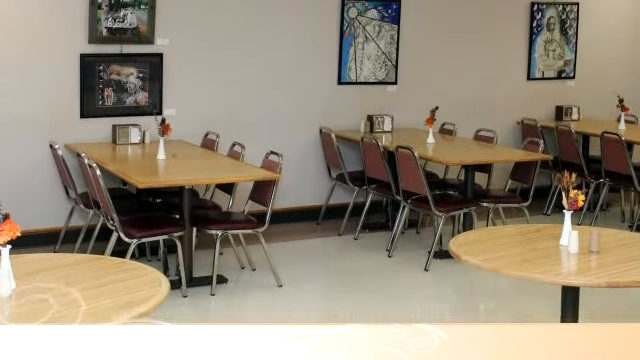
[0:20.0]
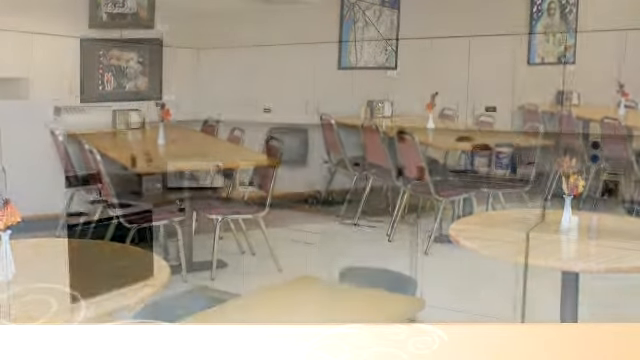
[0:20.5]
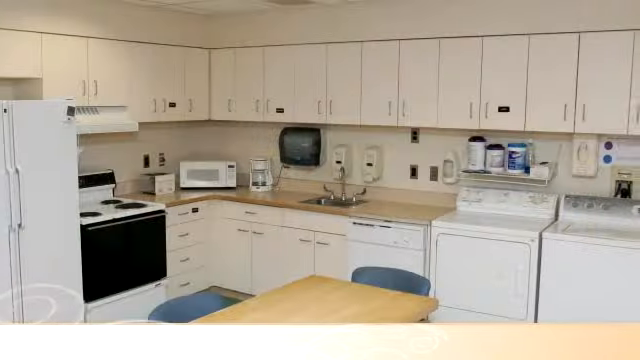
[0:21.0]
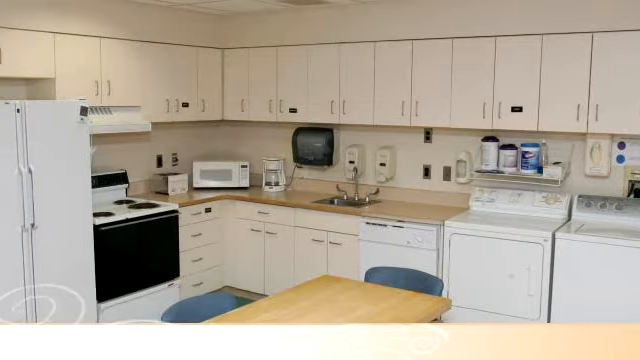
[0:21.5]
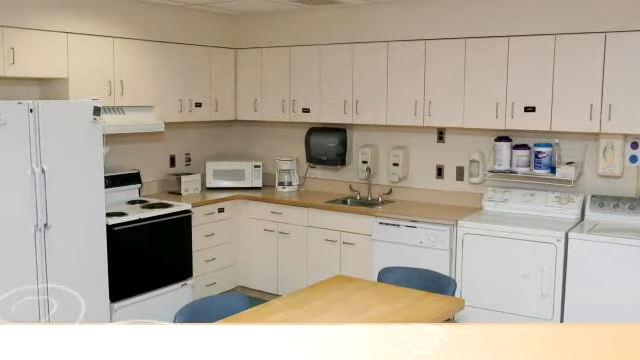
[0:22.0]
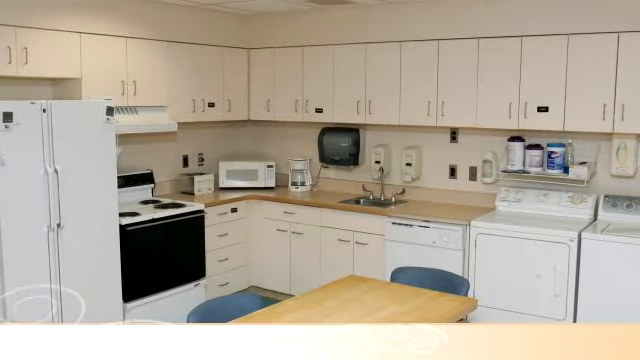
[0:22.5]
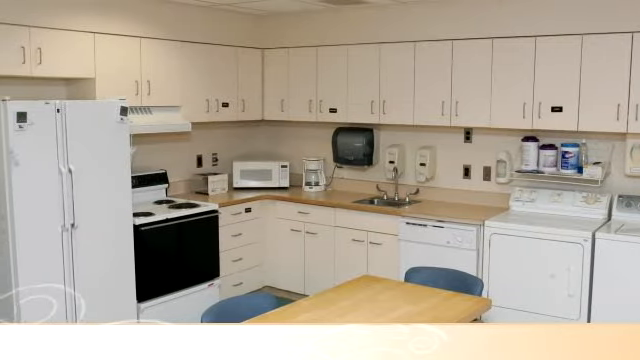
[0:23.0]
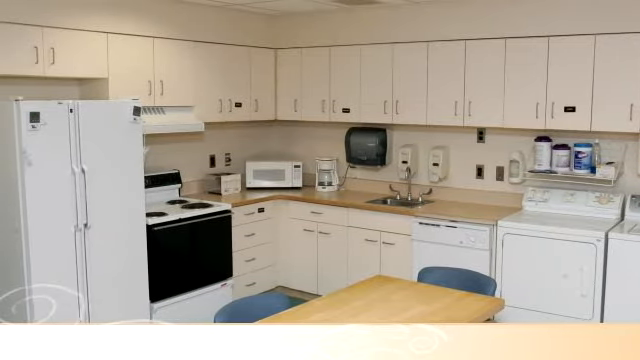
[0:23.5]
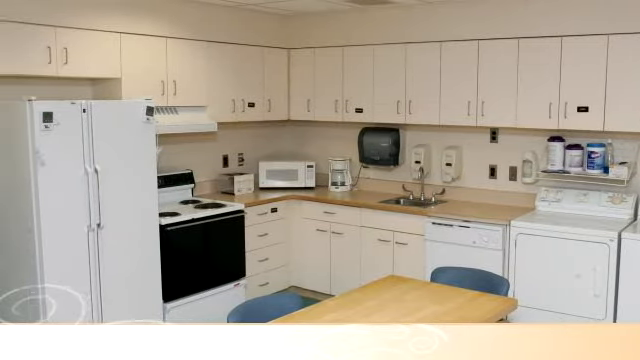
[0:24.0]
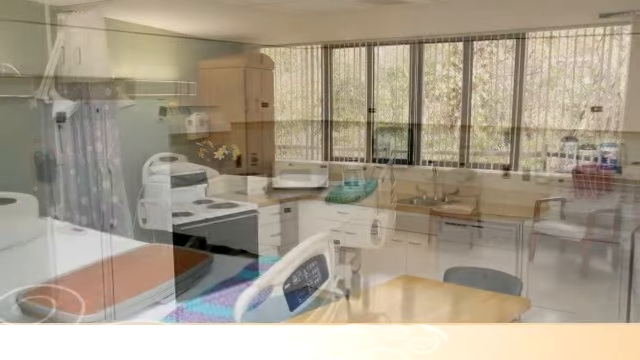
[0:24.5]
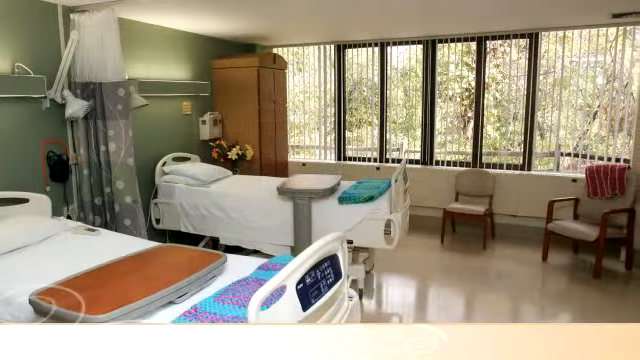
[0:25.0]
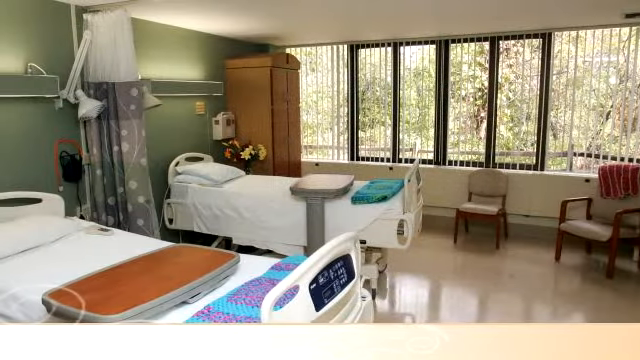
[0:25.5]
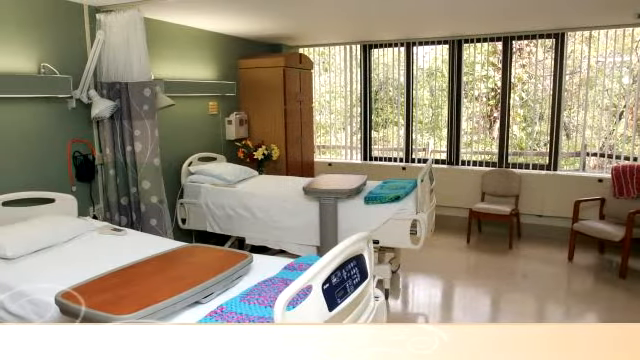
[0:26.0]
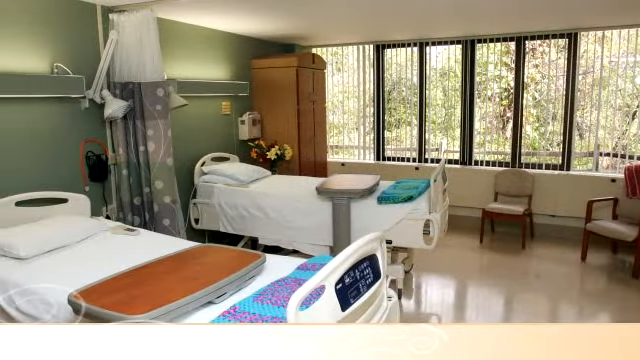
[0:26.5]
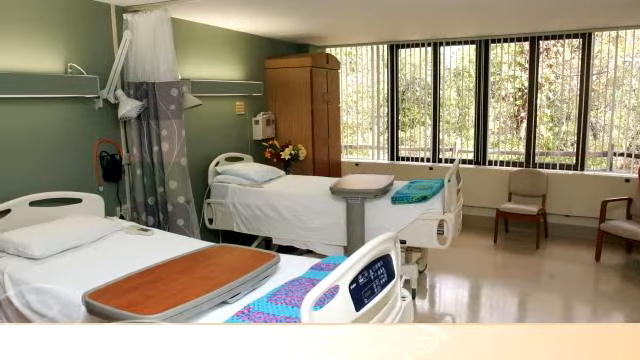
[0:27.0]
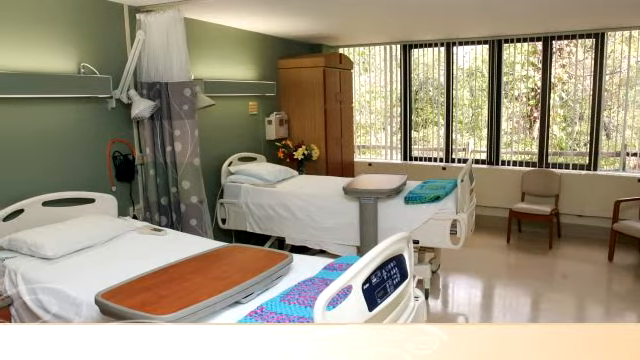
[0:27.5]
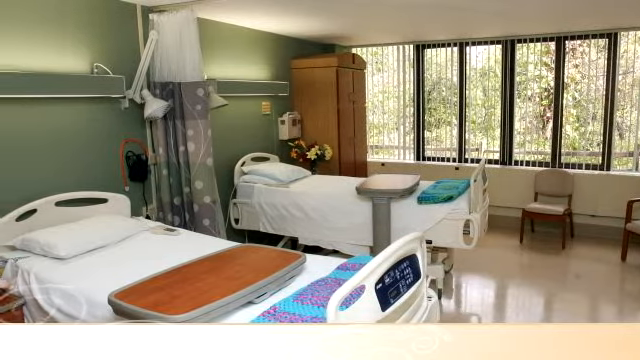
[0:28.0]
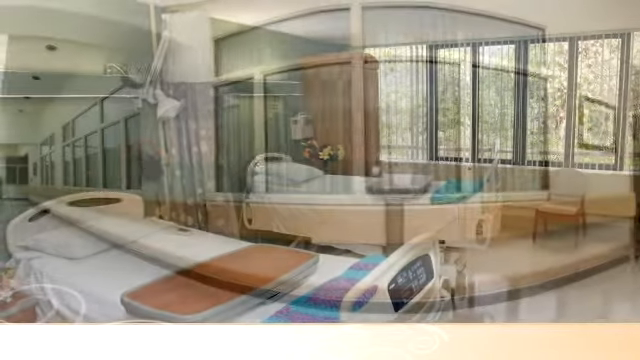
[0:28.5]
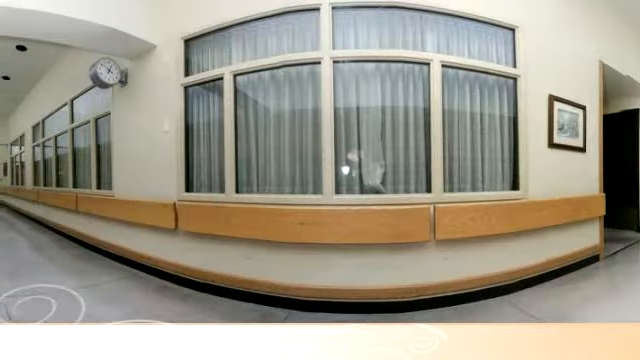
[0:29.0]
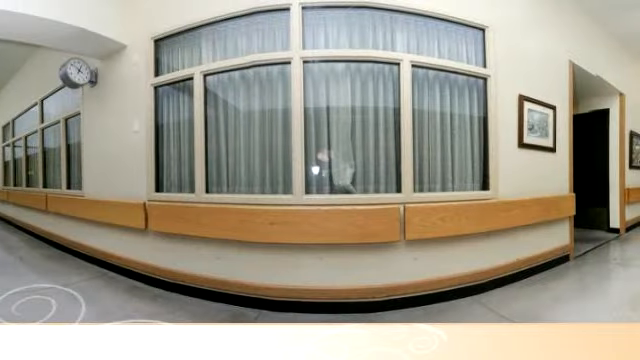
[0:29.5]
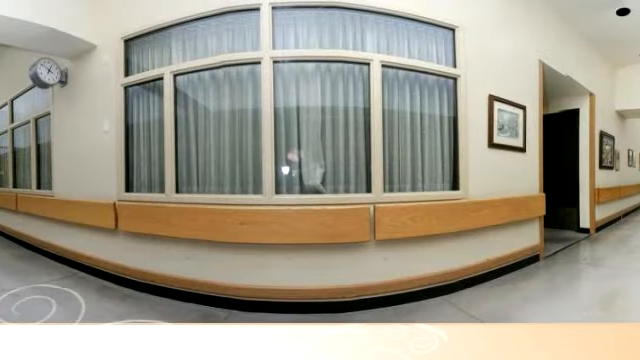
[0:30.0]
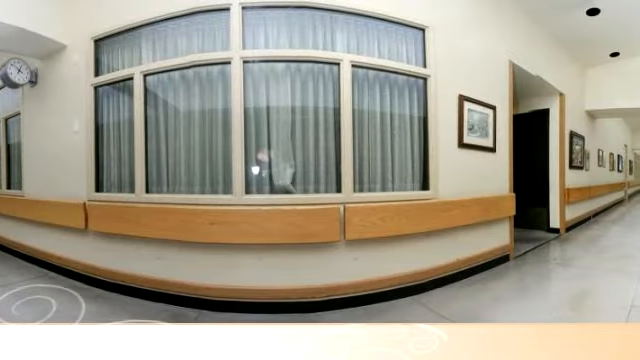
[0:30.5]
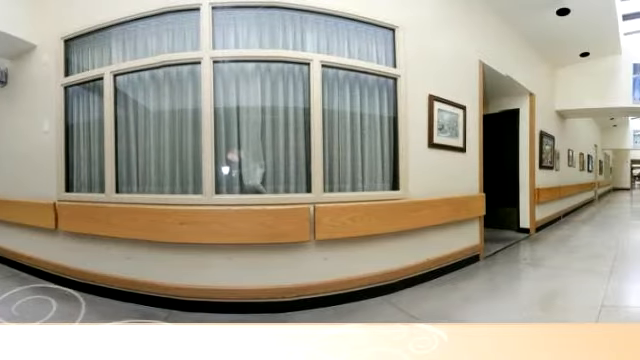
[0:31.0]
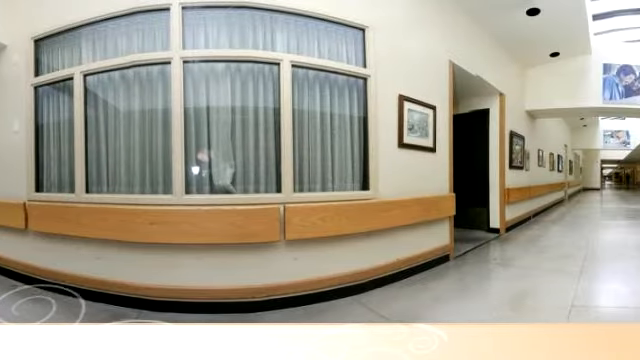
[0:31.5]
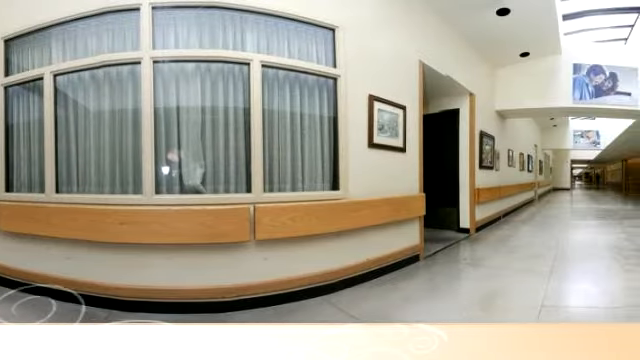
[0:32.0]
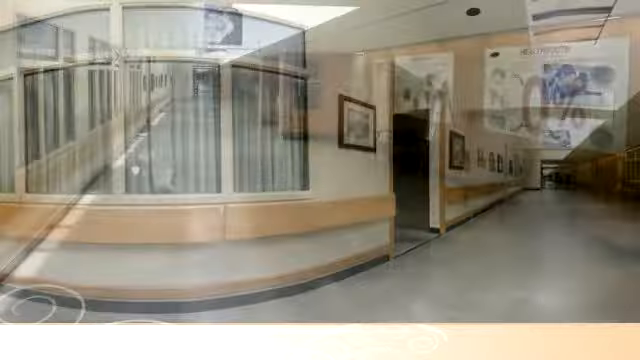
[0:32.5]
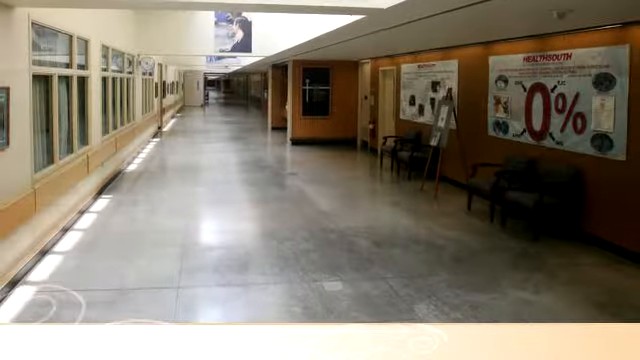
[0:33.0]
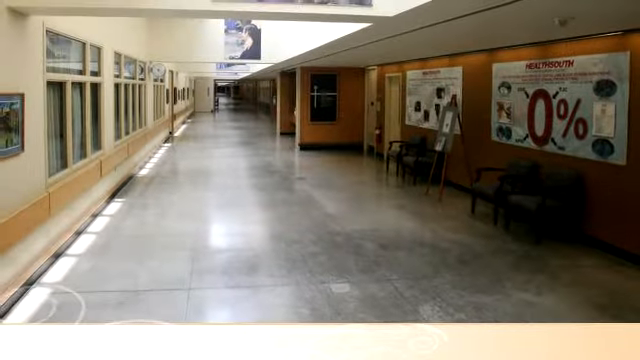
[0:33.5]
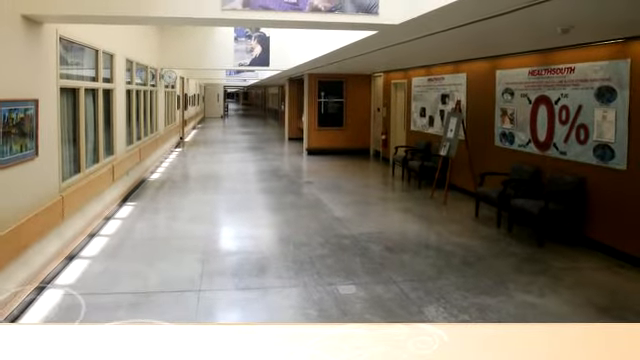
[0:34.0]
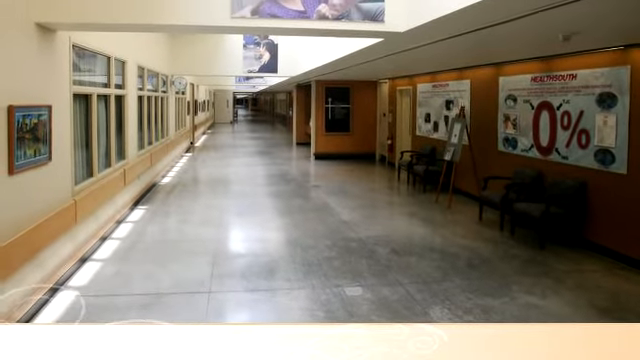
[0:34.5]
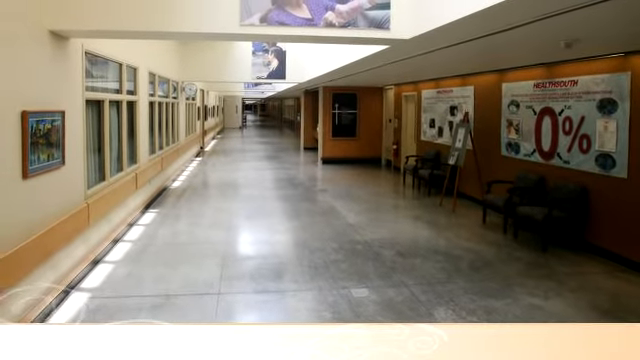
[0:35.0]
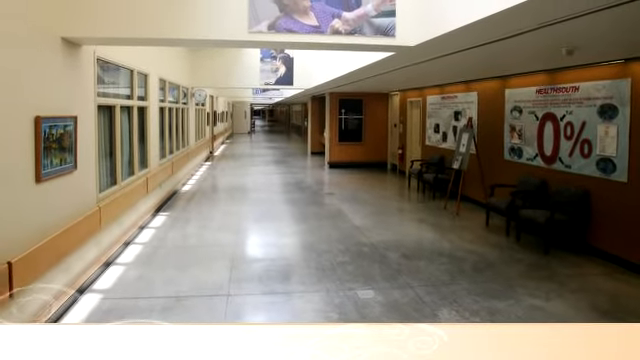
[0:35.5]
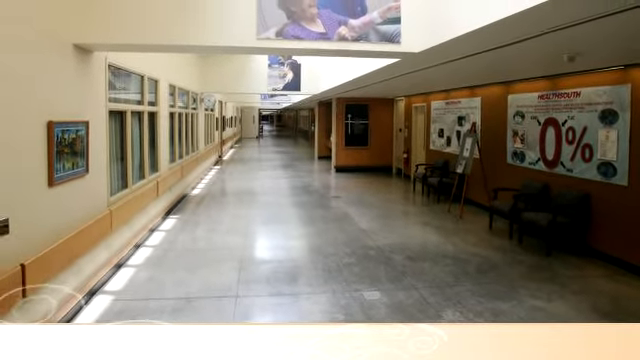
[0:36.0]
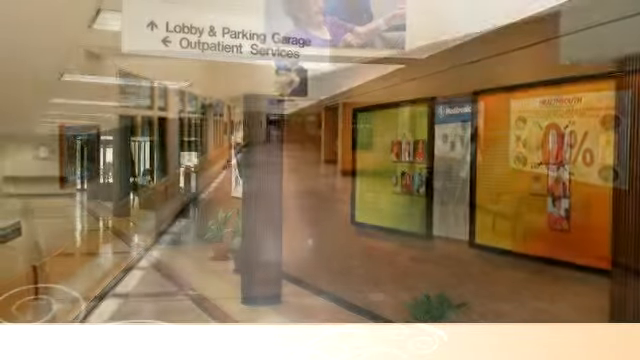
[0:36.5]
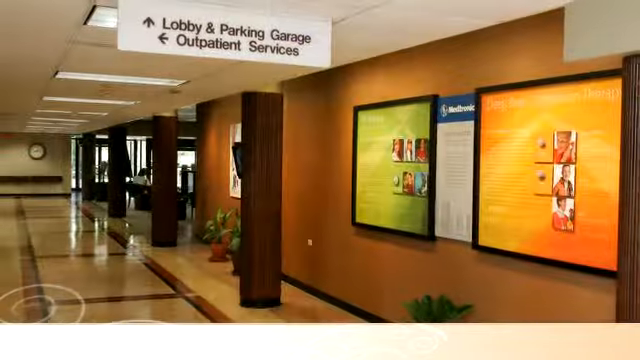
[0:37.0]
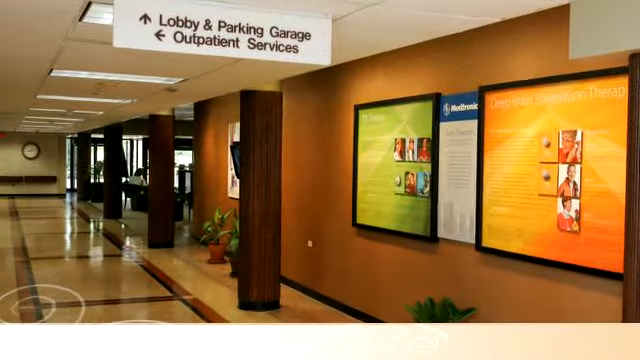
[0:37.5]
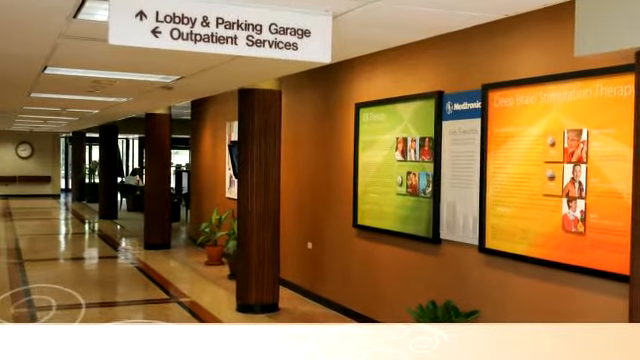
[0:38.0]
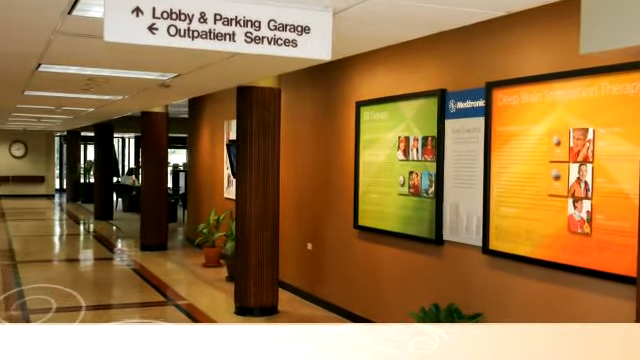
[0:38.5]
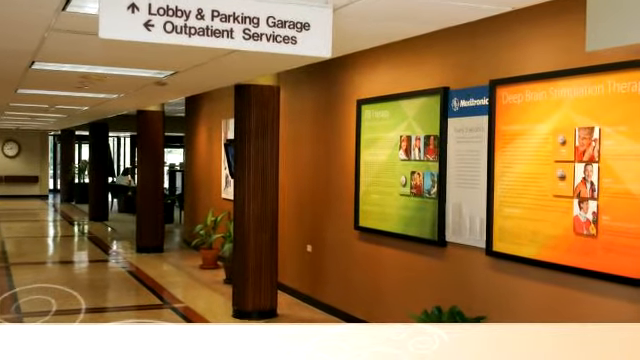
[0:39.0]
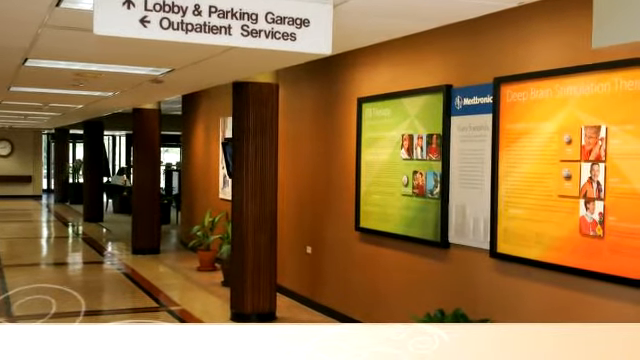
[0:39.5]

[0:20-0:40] The video is almost like a photo slideshow rather than live footage. The cafeteria appears again, then the video cuts to another area set up like a break room or kitchen, with a large double-door refrigerator, a stove, a microwave, a sink with a hand-washing station, and a washer and dryer; the appliances, cabinetry, table and chairs are all a bit older. Next is what looks like one of the hospital rooms, with a large wall of windows at the back, a large wooden wardrobe, two beds with a dividing curtain, and seating for guests. There are lights overhead, and an arrangement of flowers is on one of the side tables. The video then cuts to what looks like a hospital hallway or main breezeway with a long walkway and doors and windows on each side; overhead there is a second story with cutouts and some windows, the area being well lit and airy. The video moves on to a portion of the building that looks a bit newer, with signs and directional instructions, including where the lobby, parking, garage and outpatient services are located. Along the walls are informative posters about different conditions that patients or potential patients might be interested in.